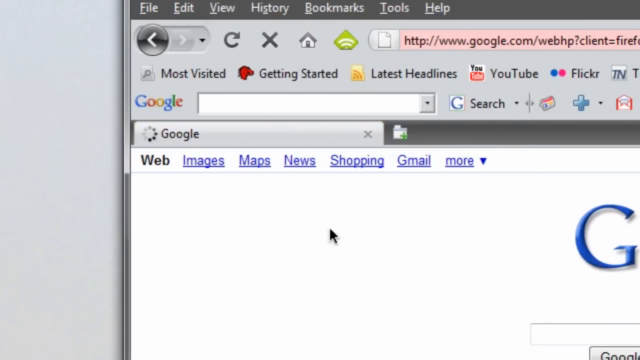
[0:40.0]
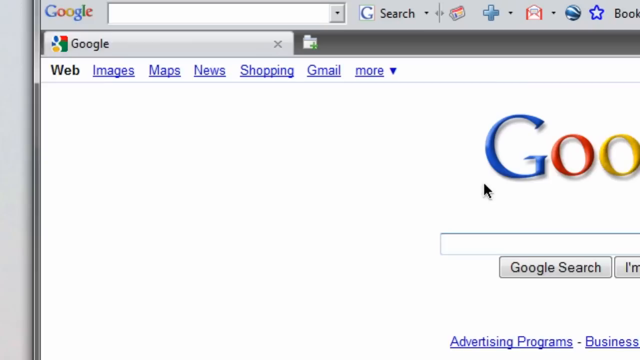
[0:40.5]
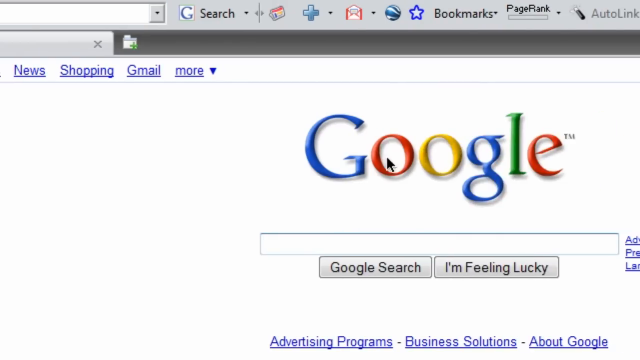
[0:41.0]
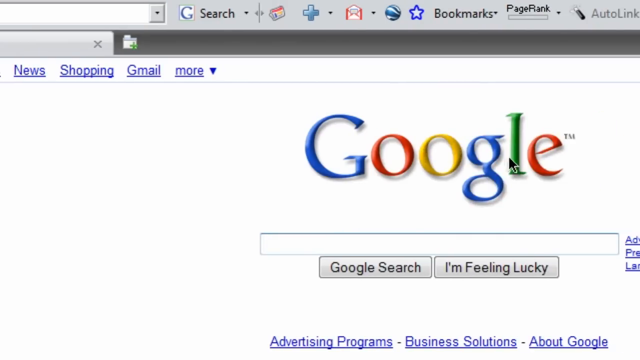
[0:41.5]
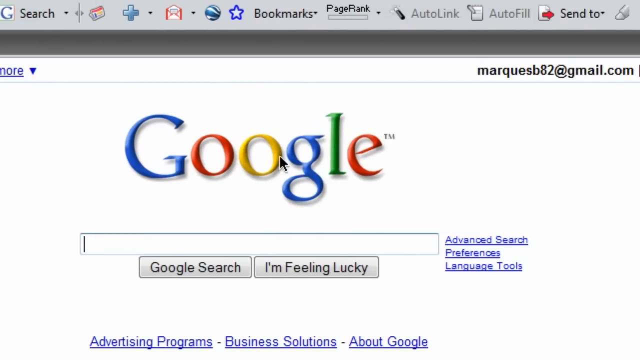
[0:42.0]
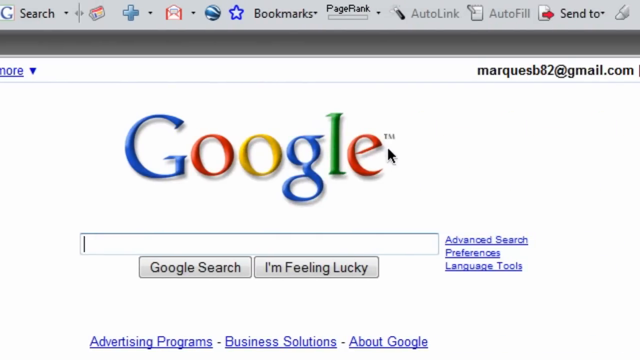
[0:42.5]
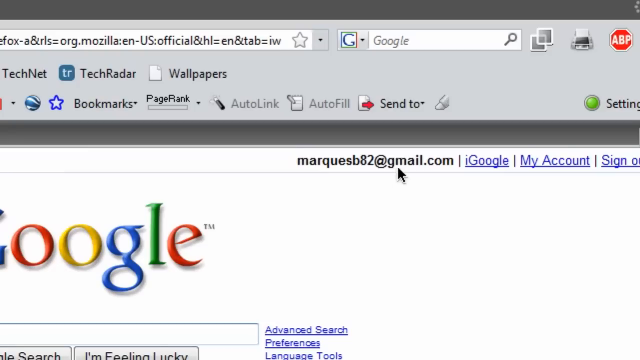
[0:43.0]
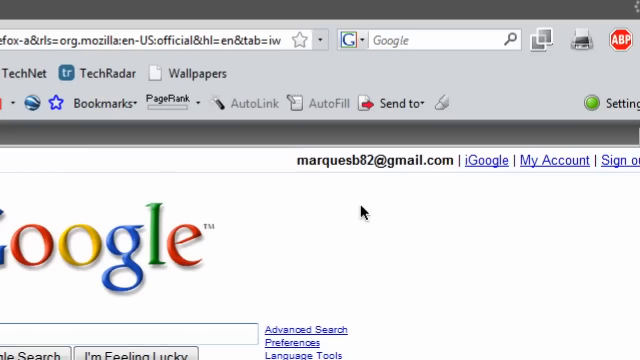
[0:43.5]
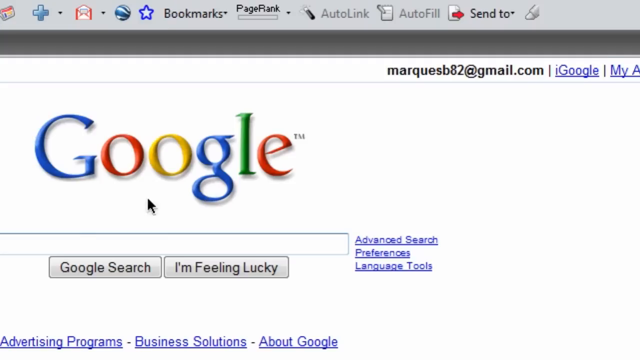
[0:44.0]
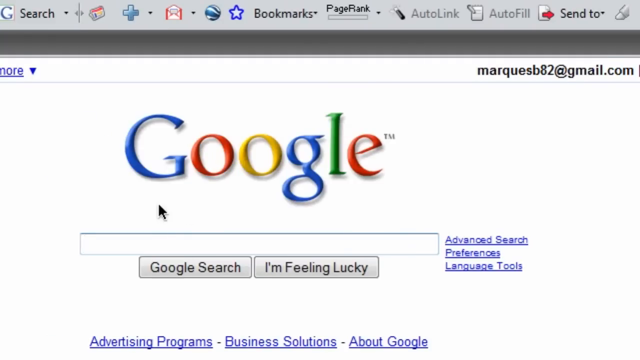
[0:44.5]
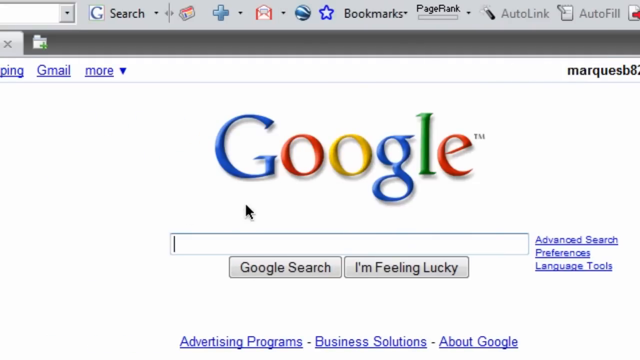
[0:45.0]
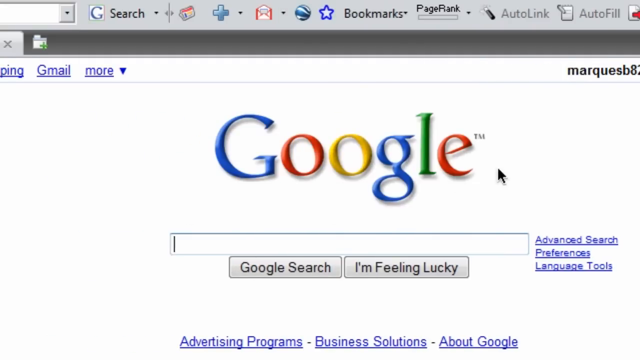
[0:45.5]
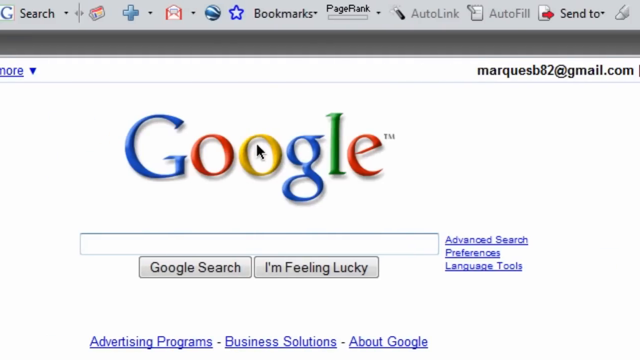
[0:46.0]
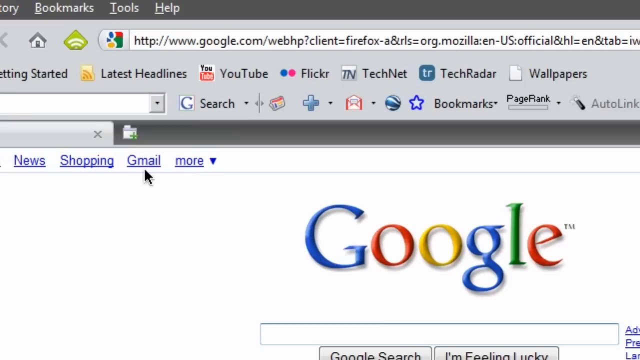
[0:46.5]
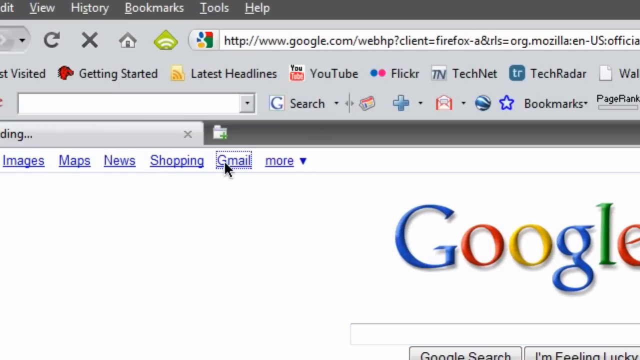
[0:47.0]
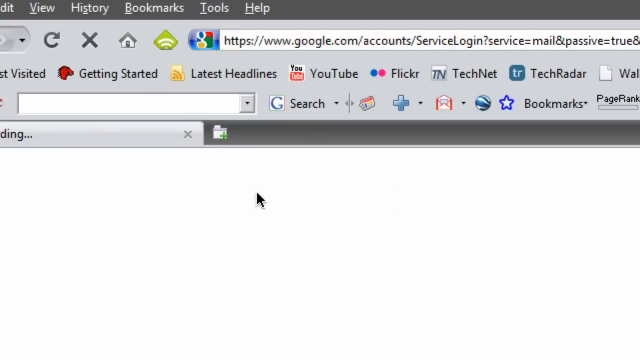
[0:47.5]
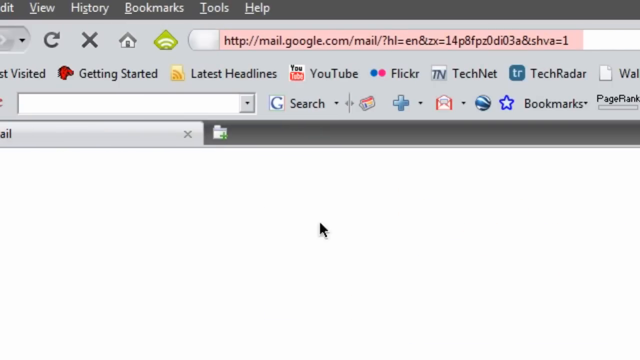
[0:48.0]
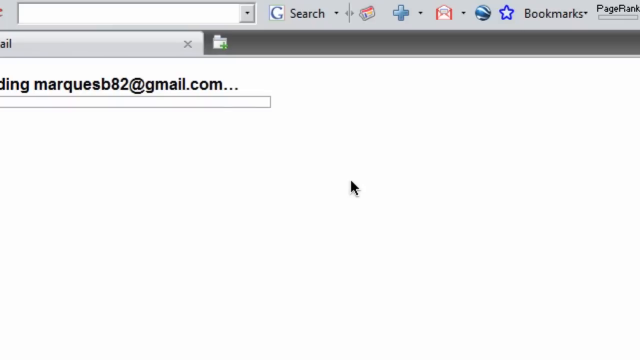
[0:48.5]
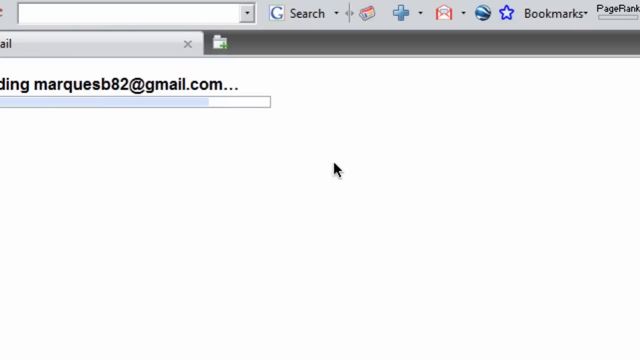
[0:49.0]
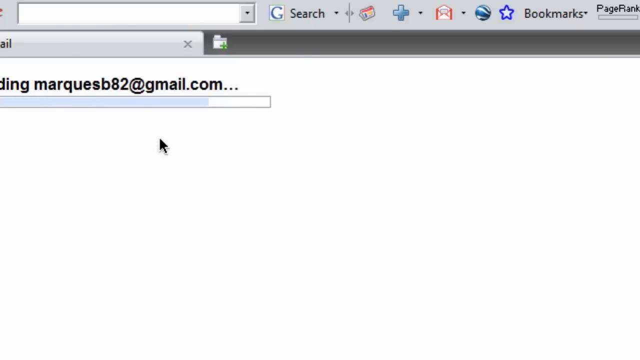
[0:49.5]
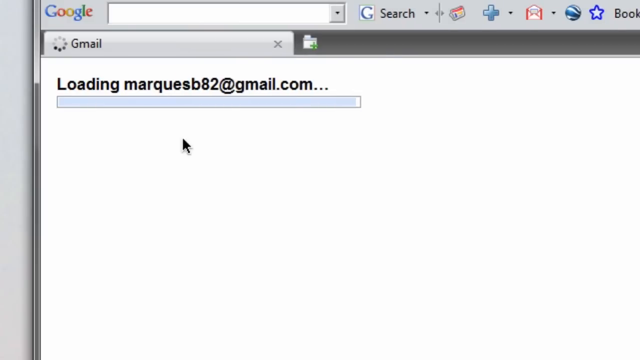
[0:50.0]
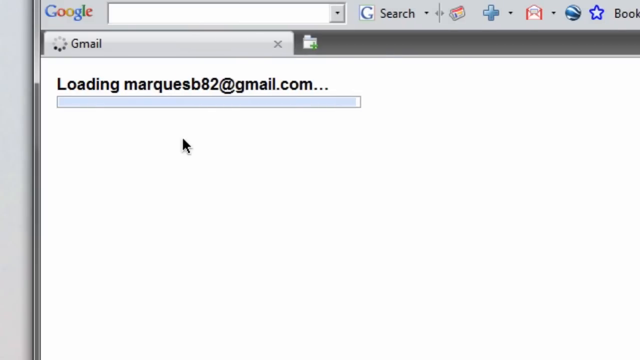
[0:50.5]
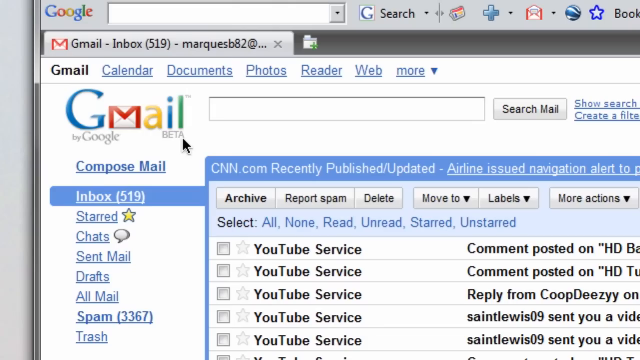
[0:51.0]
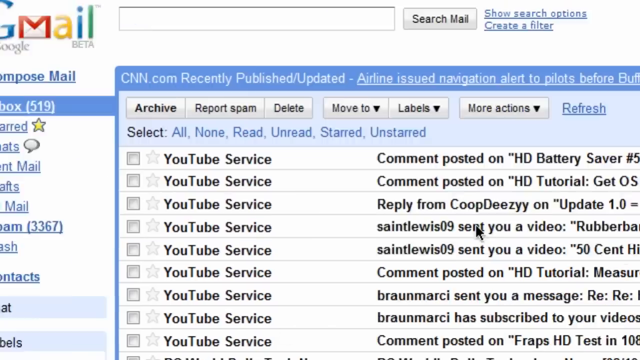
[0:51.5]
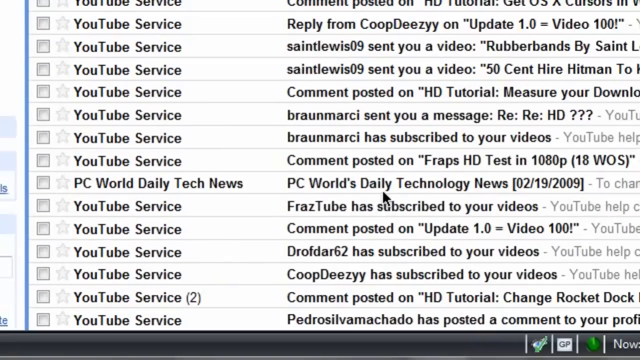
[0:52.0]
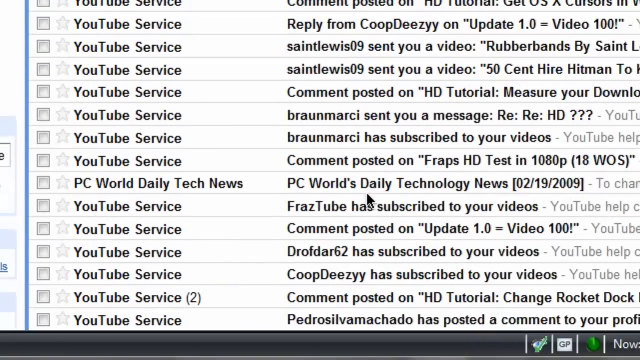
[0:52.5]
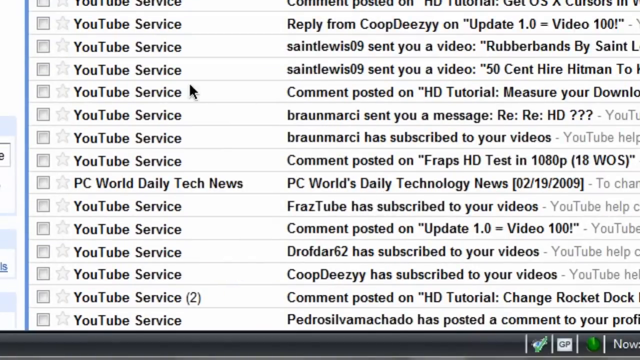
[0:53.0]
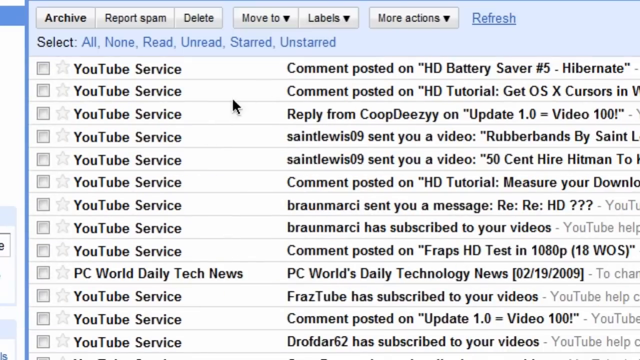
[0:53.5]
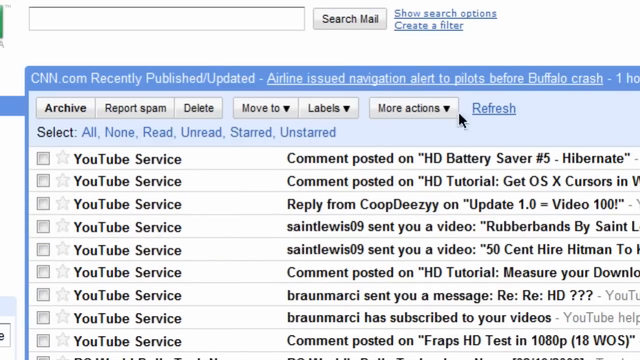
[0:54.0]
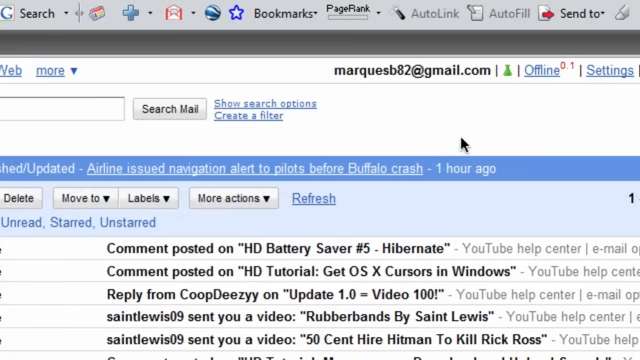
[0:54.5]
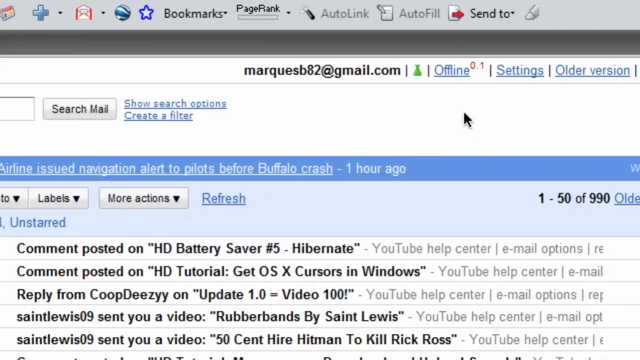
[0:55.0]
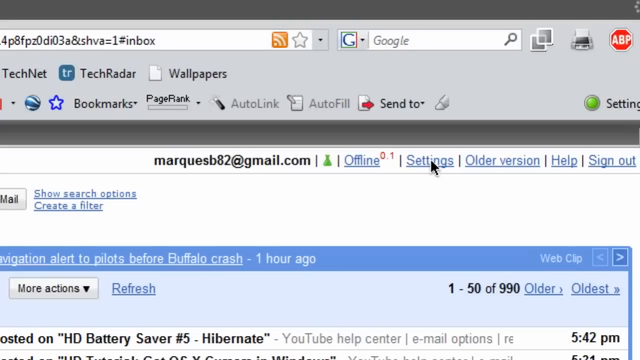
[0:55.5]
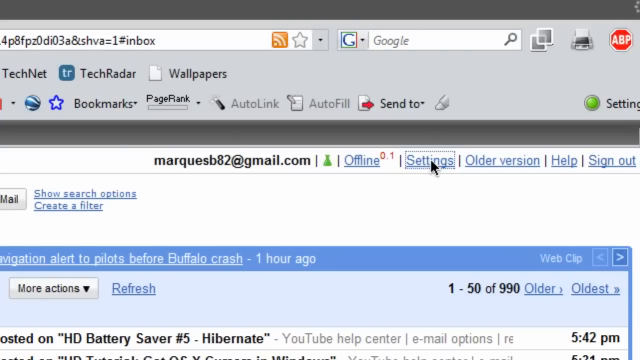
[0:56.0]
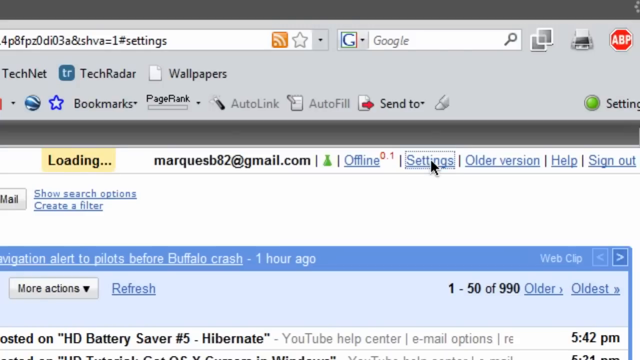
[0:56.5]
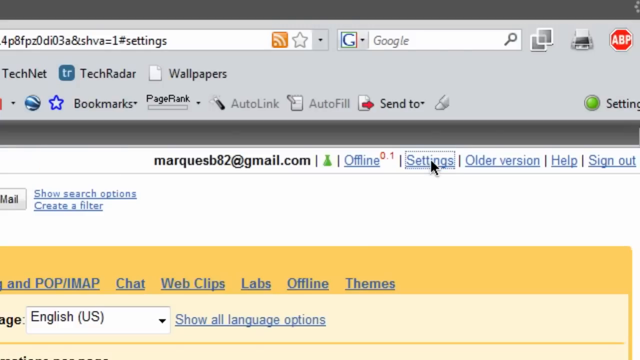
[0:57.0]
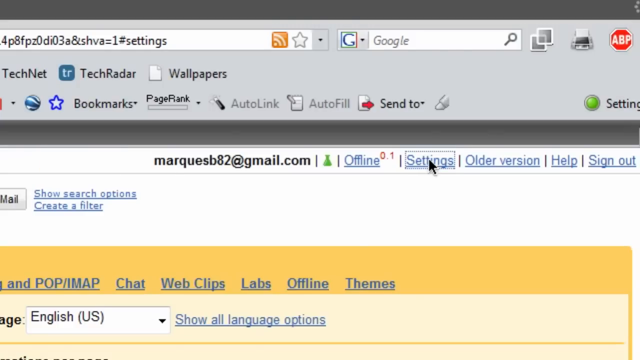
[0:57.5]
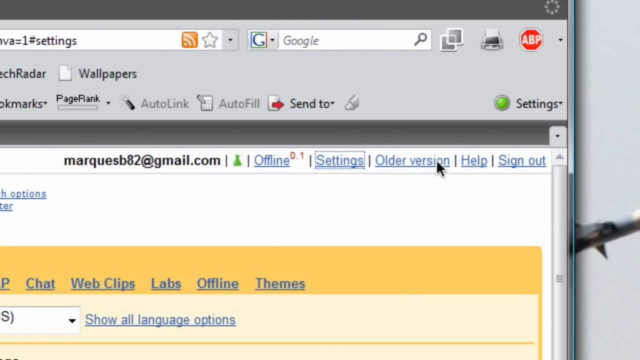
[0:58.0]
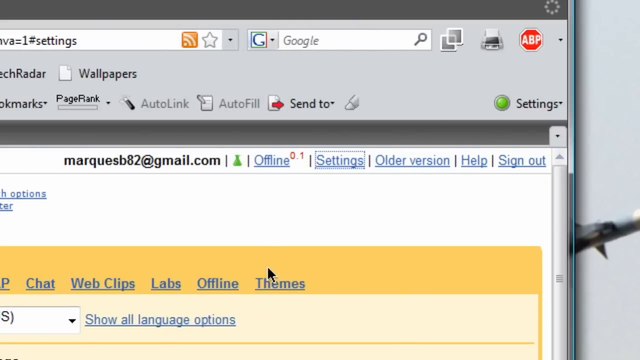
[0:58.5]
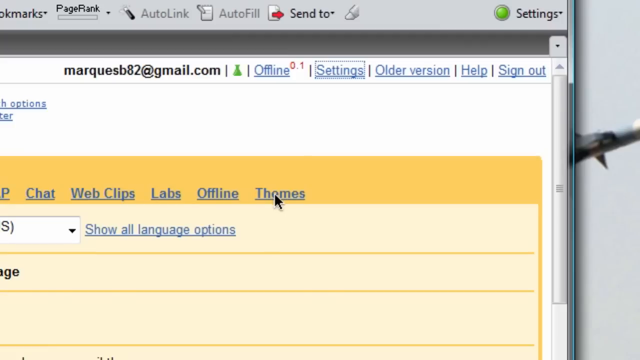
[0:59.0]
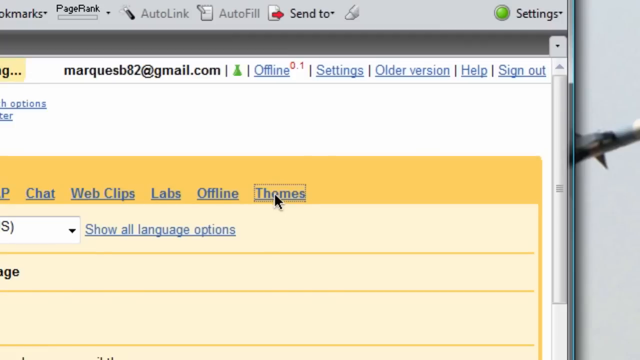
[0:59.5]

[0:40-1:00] The cursor moves across the screen to the right and briefly hovers over the Google logo. A Gmail email address is shown in the top right-hand corner. The cursor clicks on Google, which loads the inbox. The inbox contains a lot of YouTube emails, with various ones saying people have commented on things, as well as replies from various people and videos and messages people have sent. None of the emails seem to have been opened, and there are 990 emails altogether. The cursor clicks on settings and then themes. The aeroplane image seen earlier may actually be the user's desktop background, as parts of the aeroplane are visible.